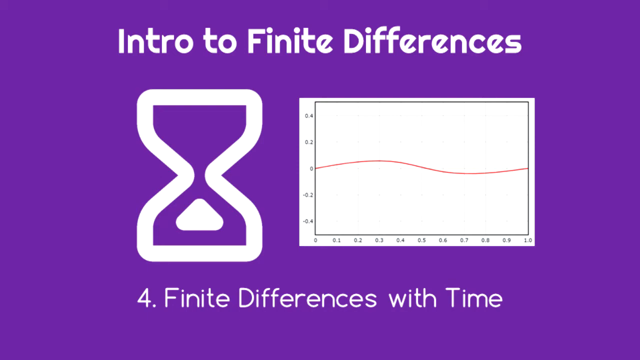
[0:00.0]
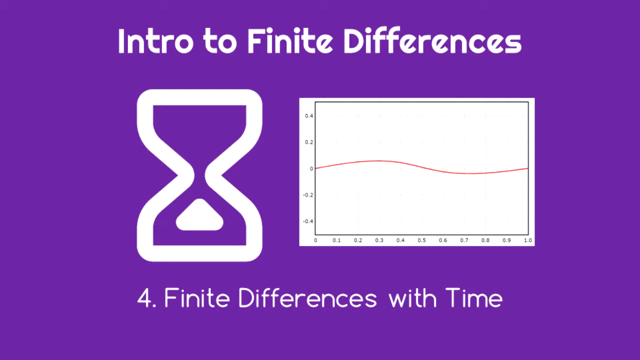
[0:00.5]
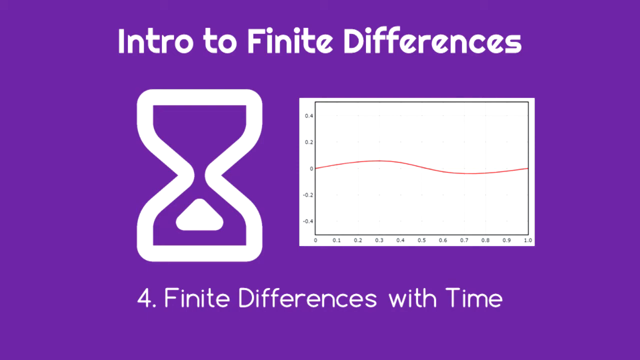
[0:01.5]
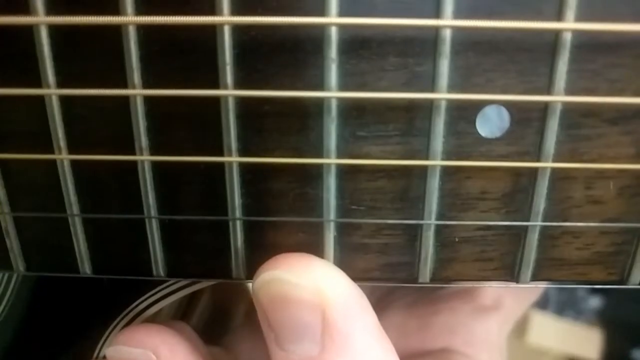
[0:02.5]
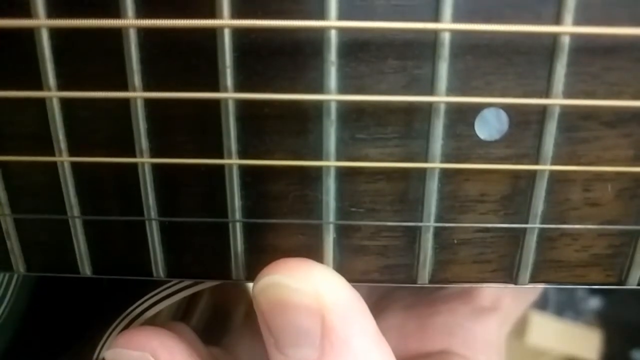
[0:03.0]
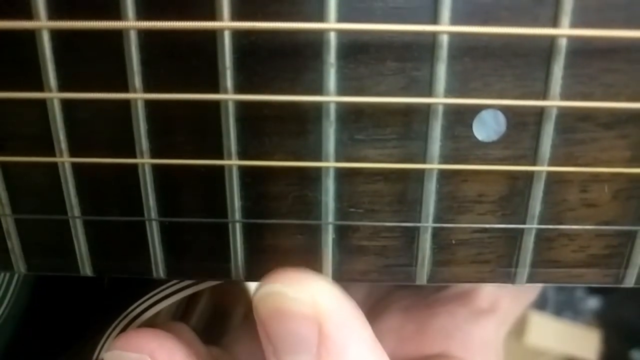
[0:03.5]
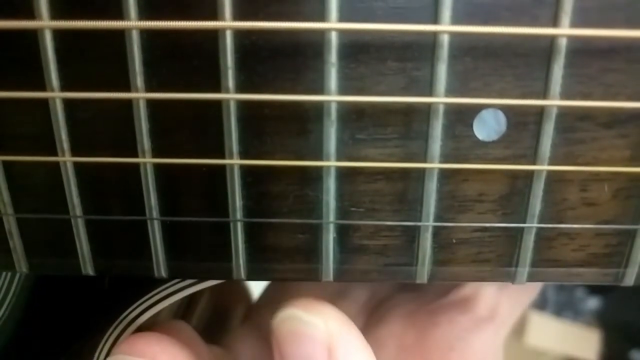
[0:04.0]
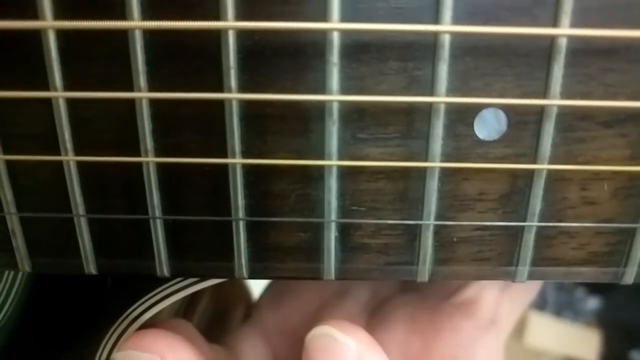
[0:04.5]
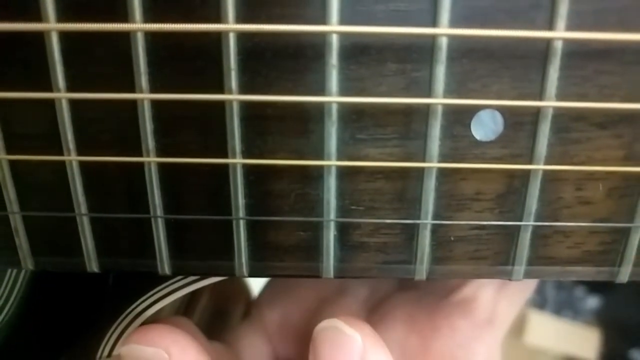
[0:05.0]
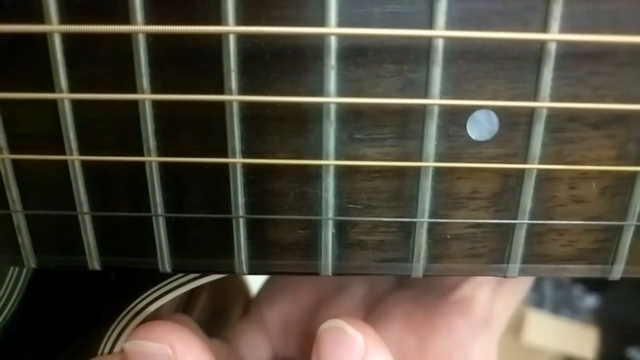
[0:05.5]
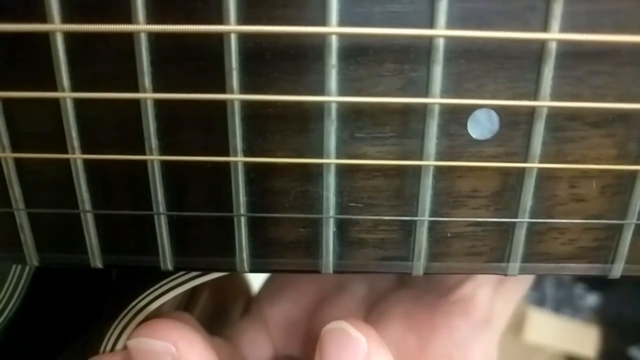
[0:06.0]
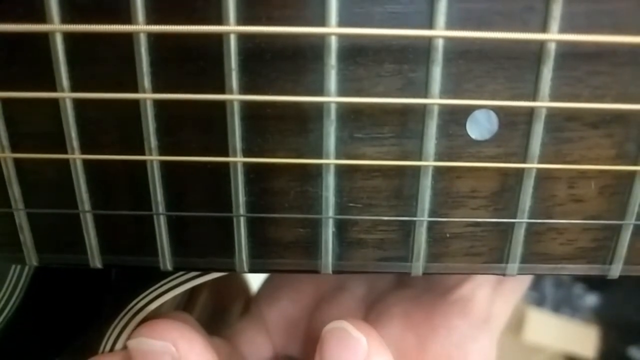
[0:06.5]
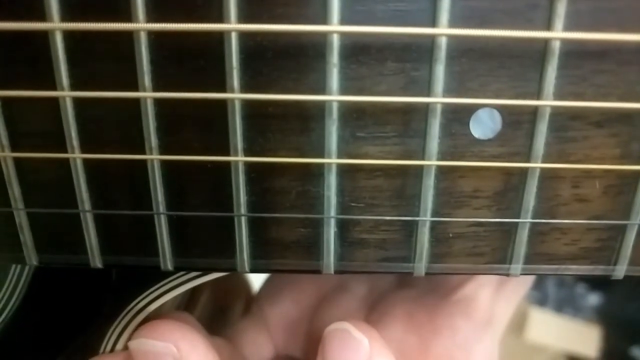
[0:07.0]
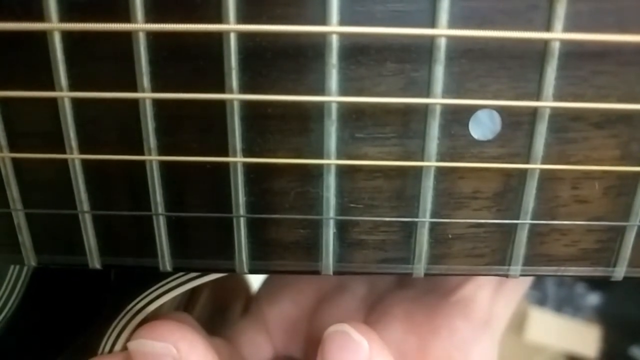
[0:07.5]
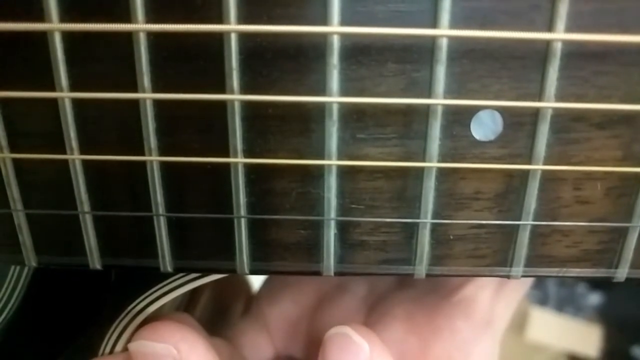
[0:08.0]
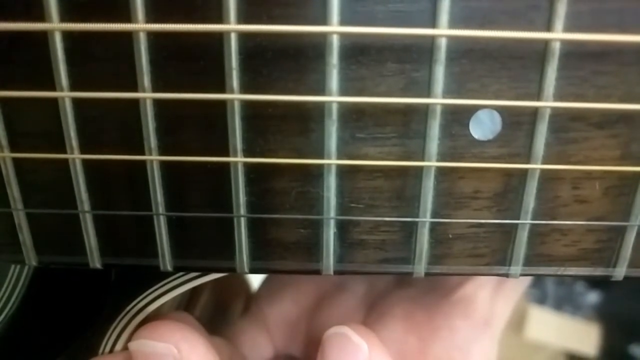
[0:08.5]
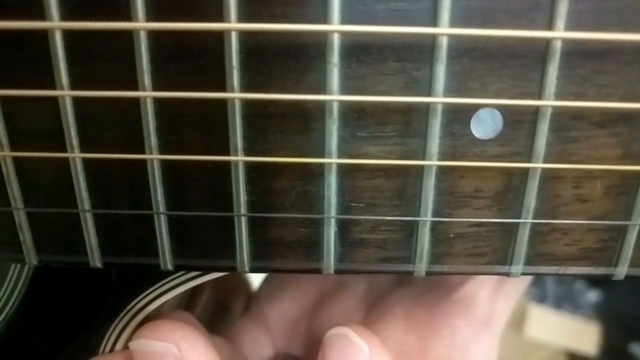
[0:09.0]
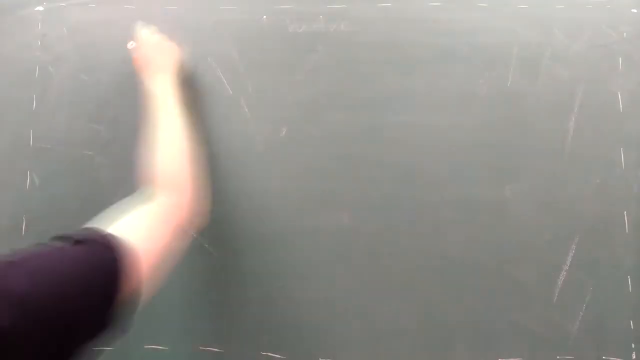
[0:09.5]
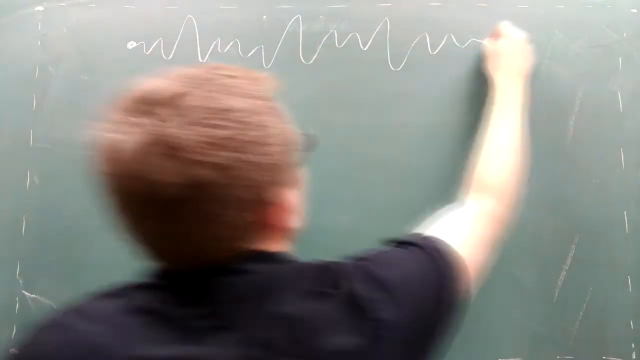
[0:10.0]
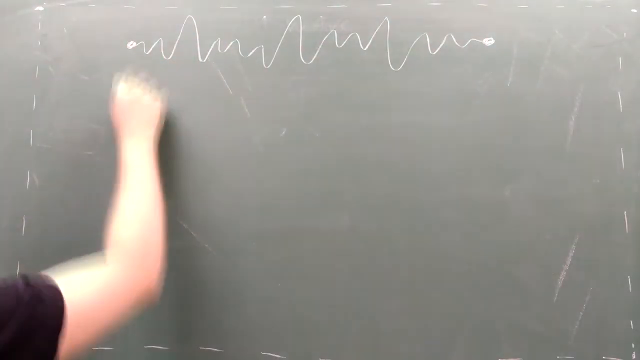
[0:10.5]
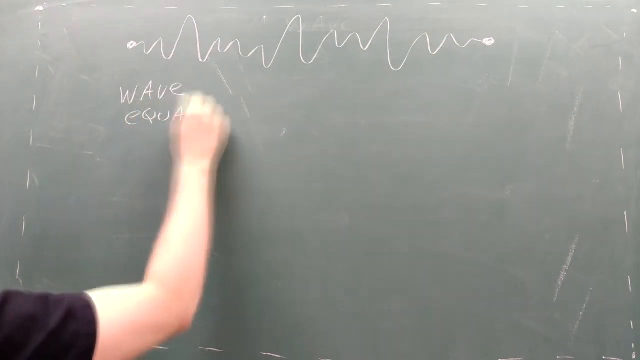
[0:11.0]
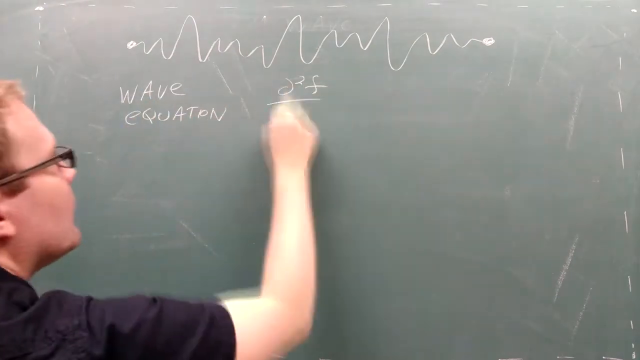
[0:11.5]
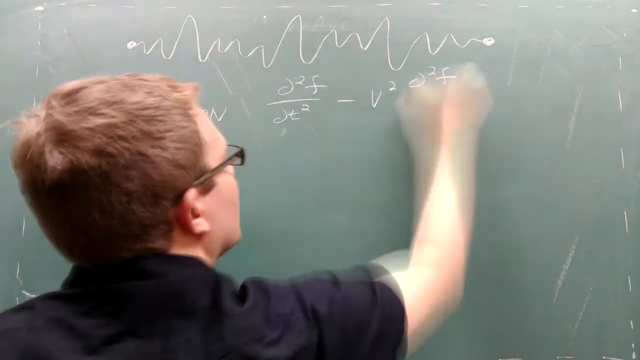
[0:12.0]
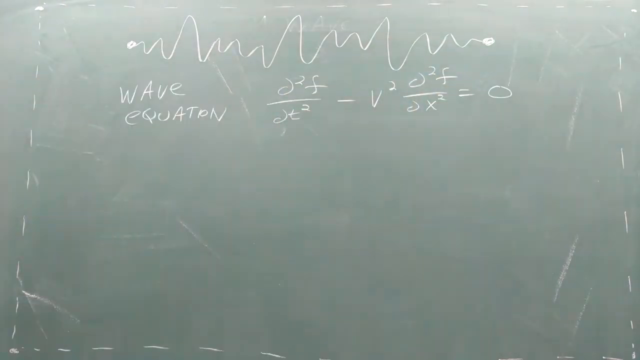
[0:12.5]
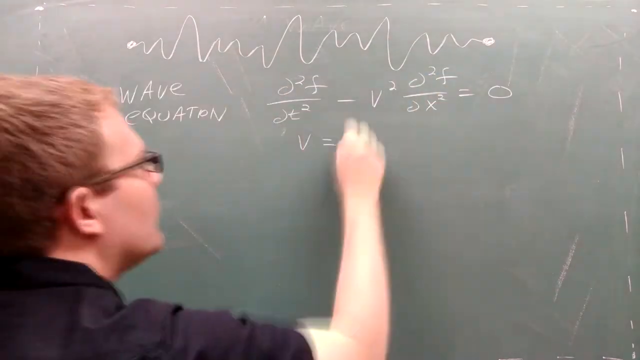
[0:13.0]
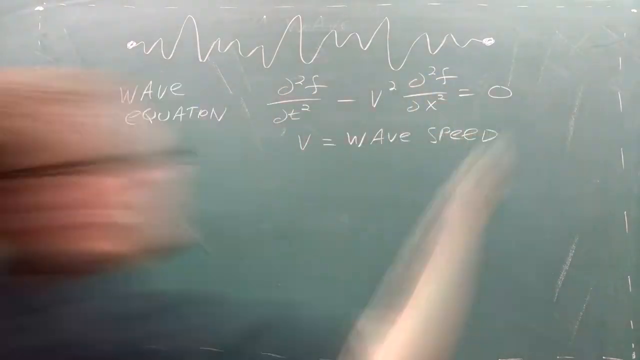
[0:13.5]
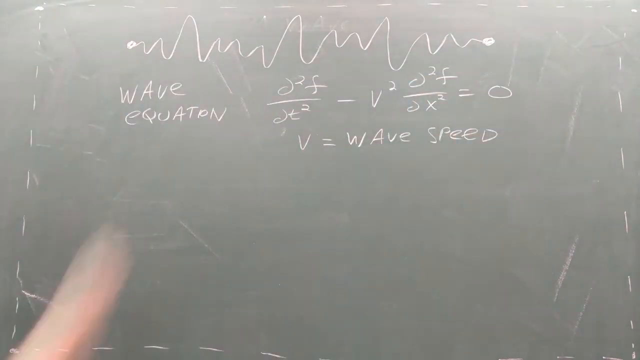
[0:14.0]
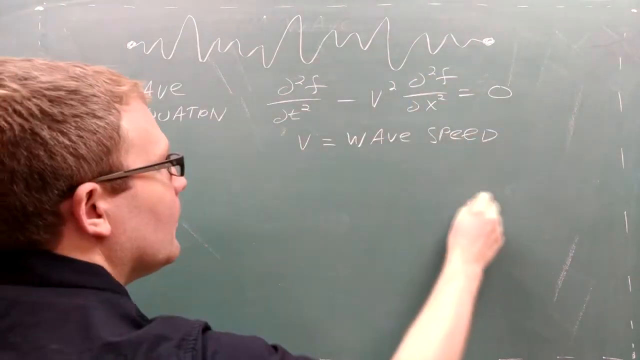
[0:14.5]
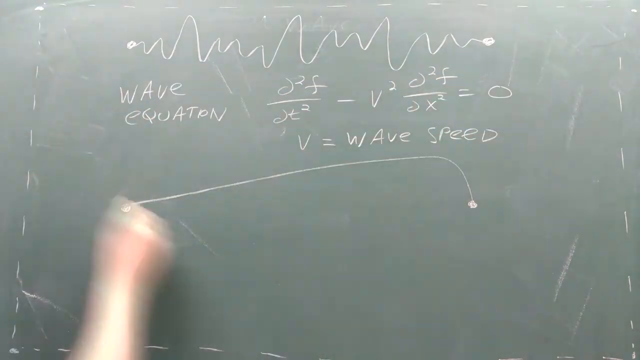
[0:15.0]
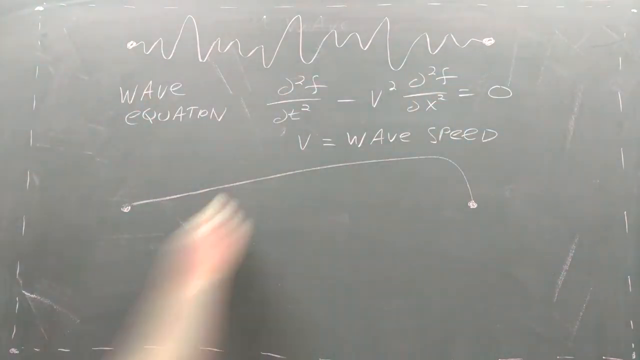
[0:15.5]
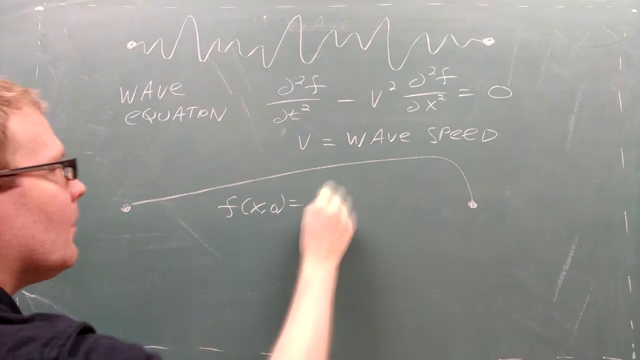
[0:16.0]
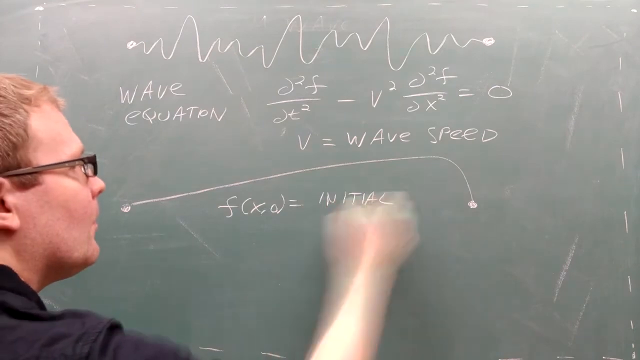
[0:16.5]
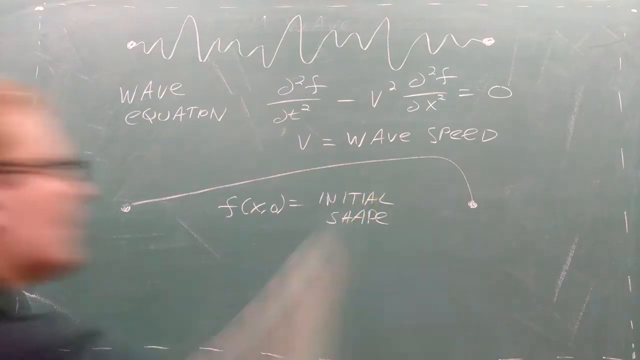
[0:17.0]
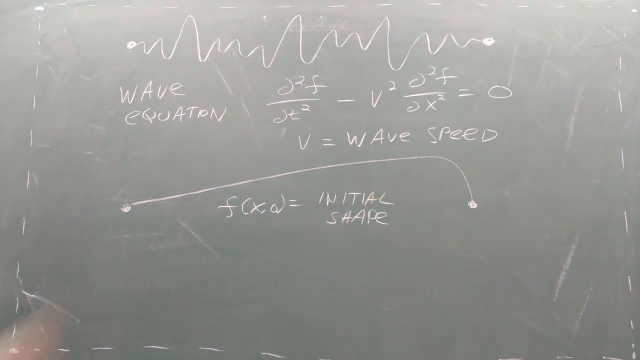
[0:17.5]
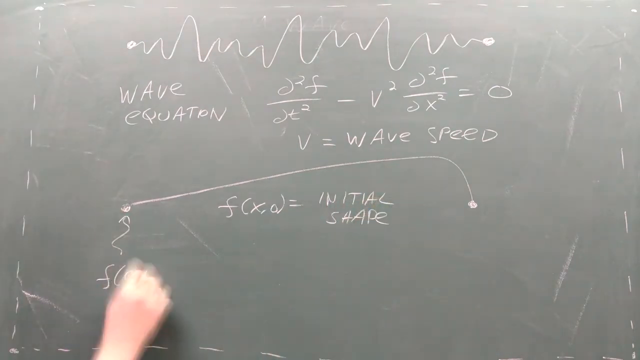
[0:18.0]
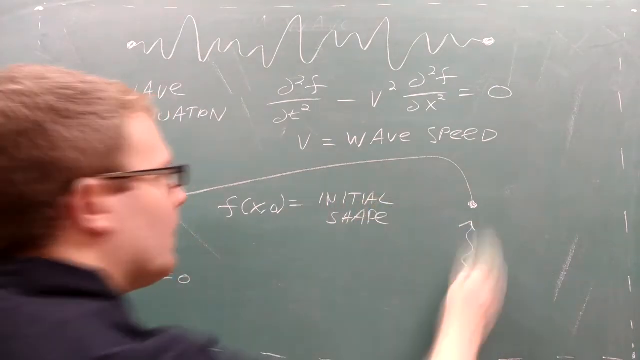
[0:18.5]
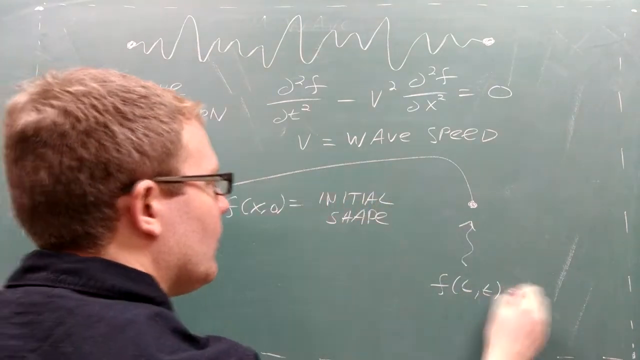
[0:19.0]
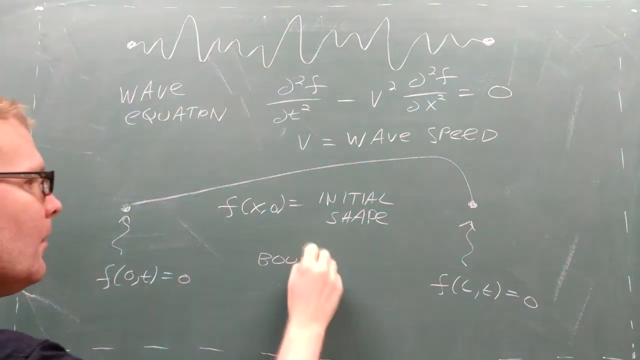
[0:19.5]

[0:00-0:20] The video appears to be a math class about different types of waves. In the intro, a graph appears along with "intro to finite differences." At the beginning the shot is a bit off, showing the ceiling, and then it pushes toward a man writing wave equations on a board, along with pictures of different waves, speeds, equations and initial shapes. He first draws a wave, then writes the equations right after, noting that v equals wave speed.